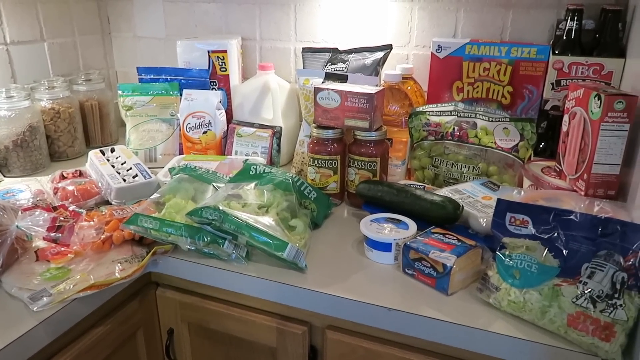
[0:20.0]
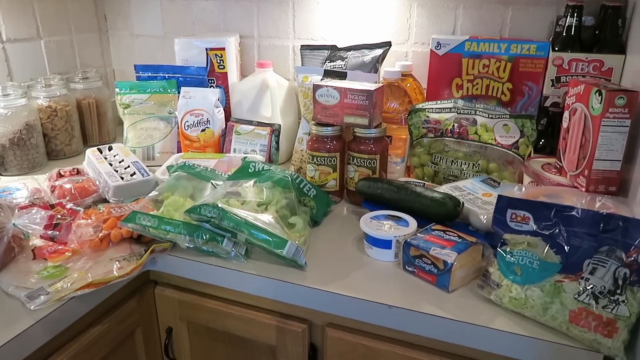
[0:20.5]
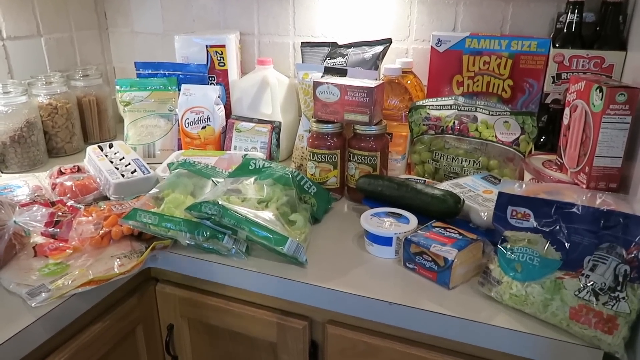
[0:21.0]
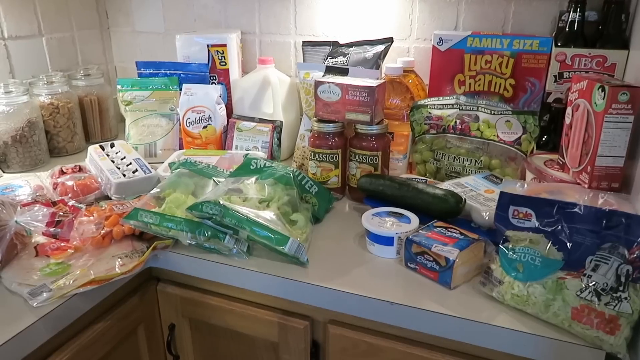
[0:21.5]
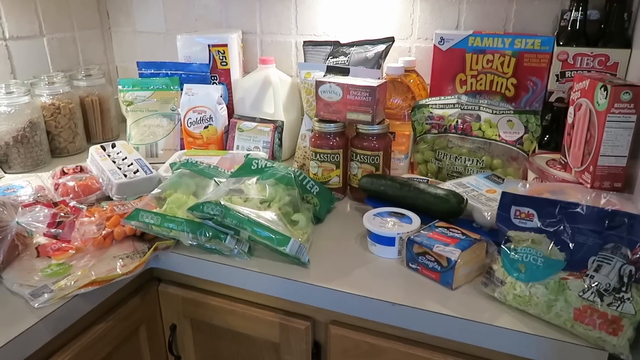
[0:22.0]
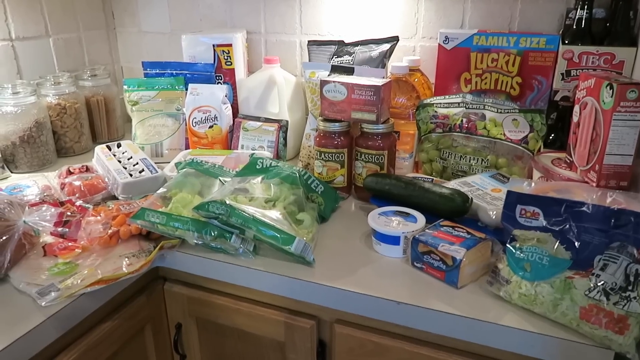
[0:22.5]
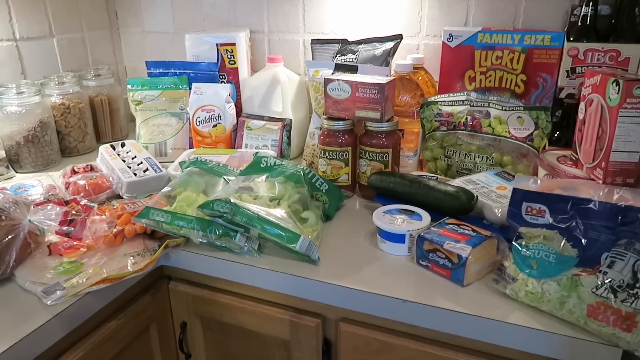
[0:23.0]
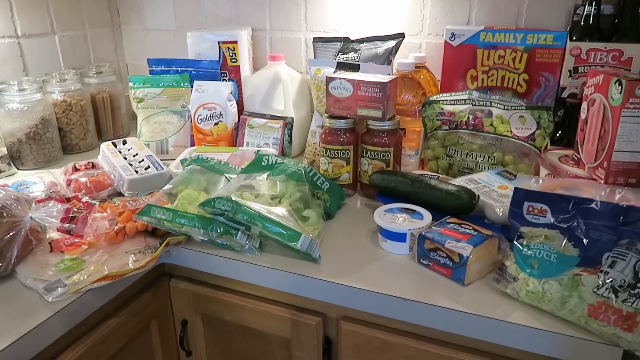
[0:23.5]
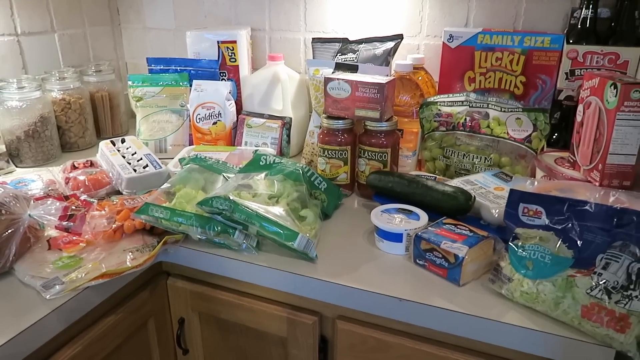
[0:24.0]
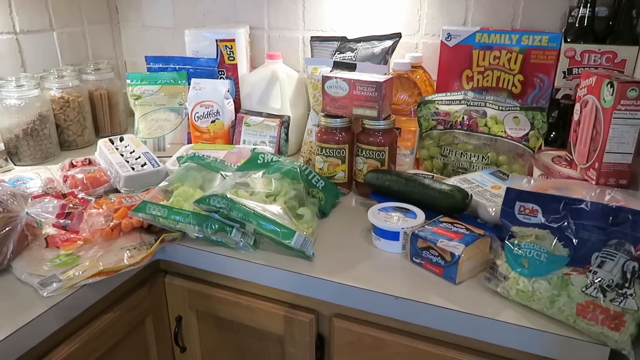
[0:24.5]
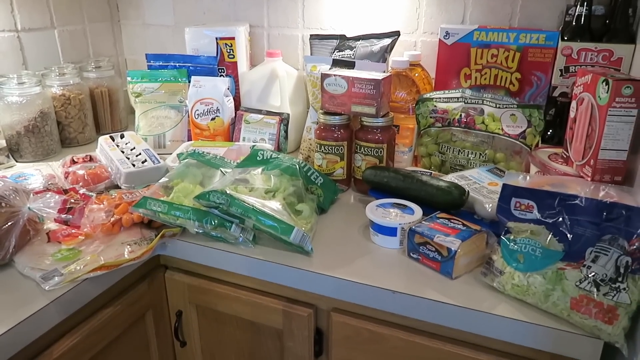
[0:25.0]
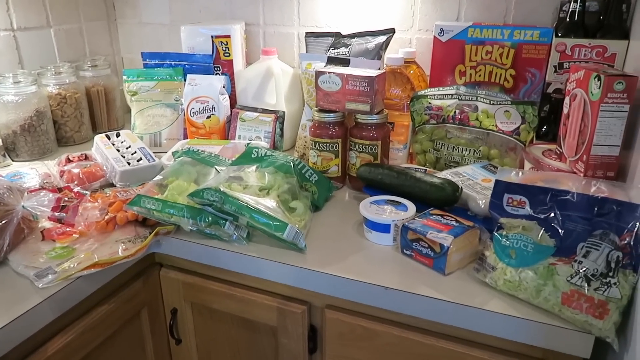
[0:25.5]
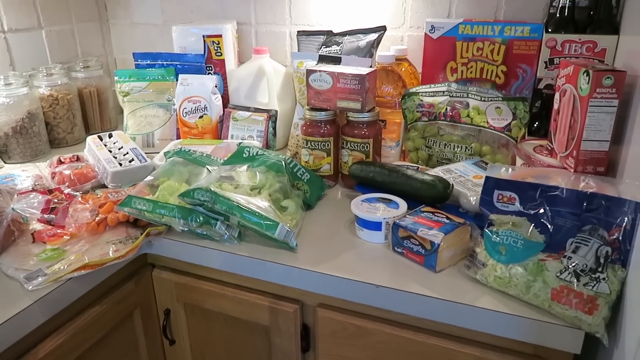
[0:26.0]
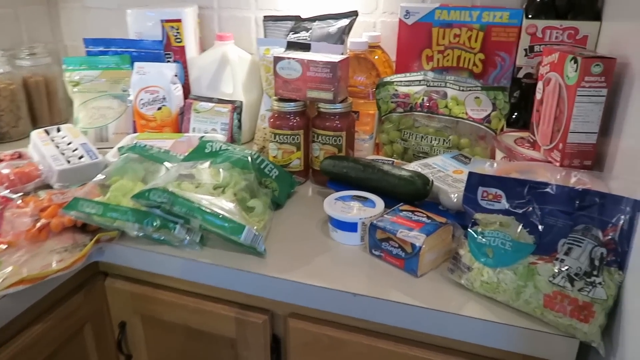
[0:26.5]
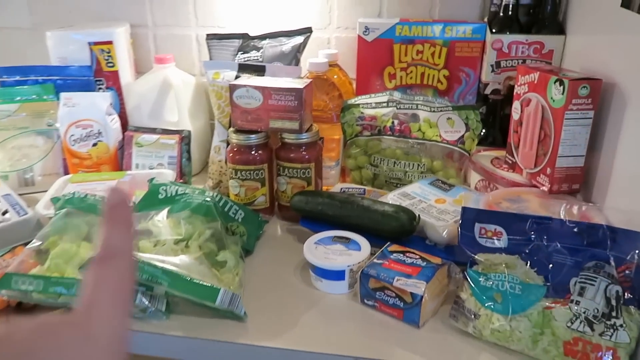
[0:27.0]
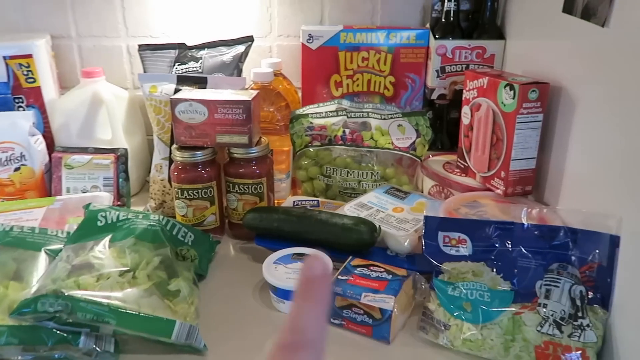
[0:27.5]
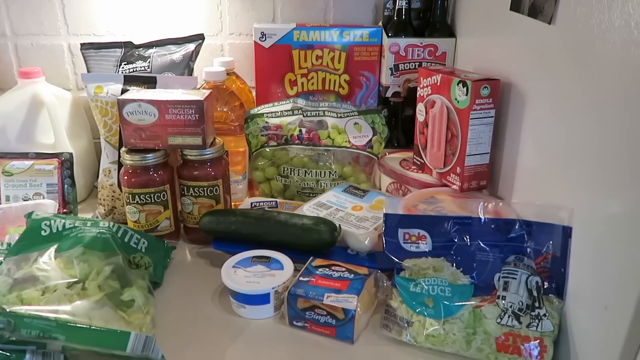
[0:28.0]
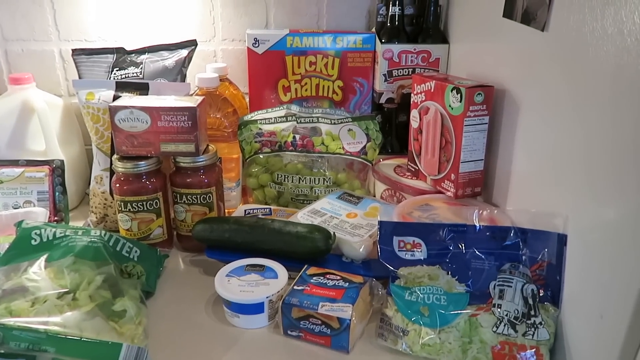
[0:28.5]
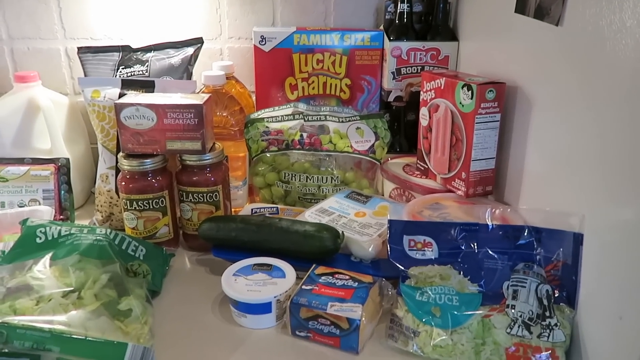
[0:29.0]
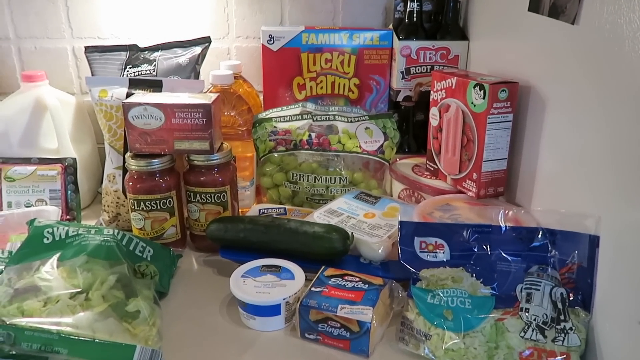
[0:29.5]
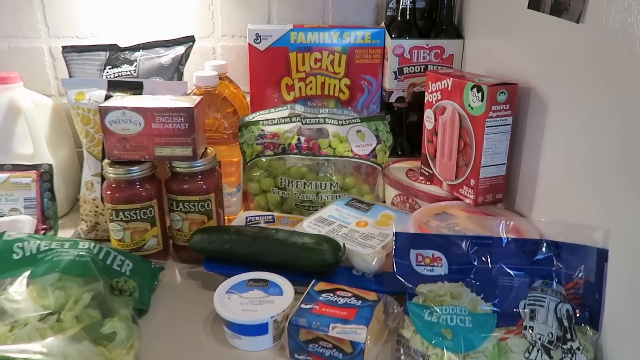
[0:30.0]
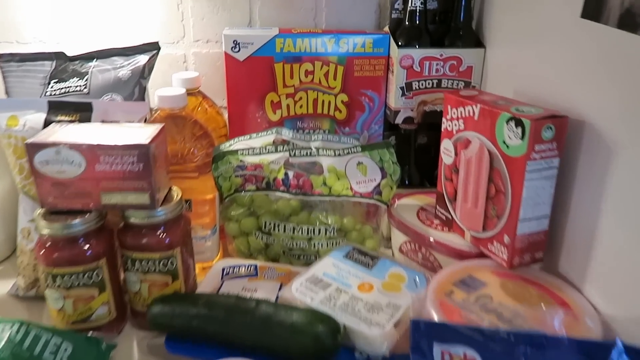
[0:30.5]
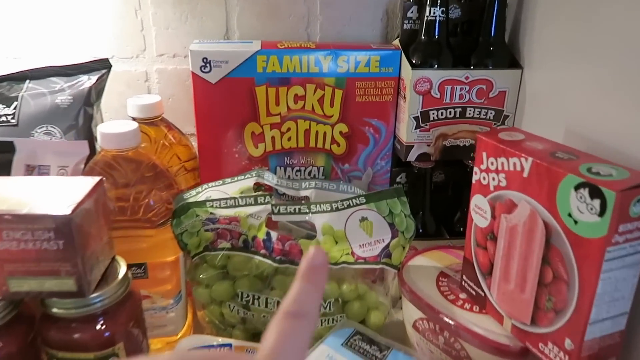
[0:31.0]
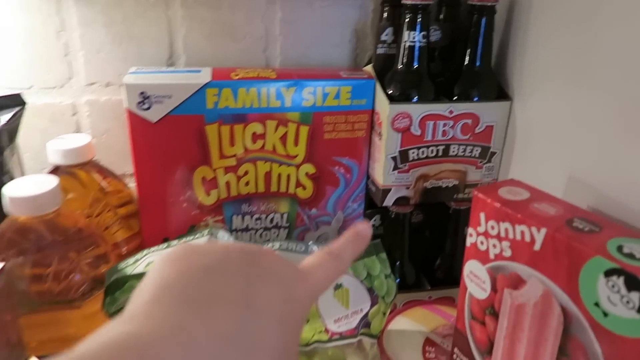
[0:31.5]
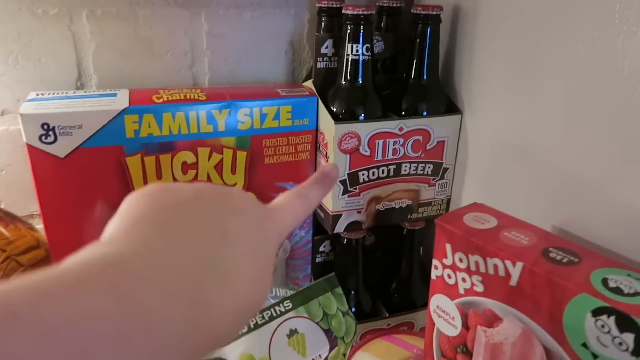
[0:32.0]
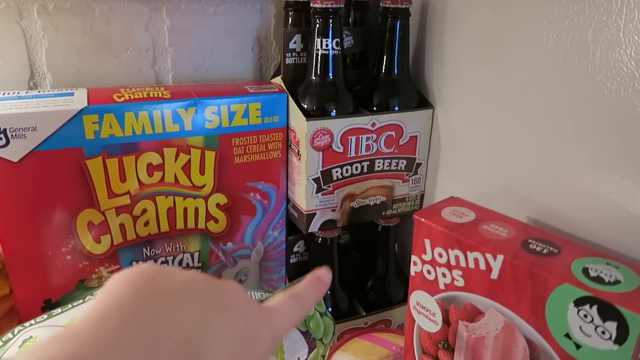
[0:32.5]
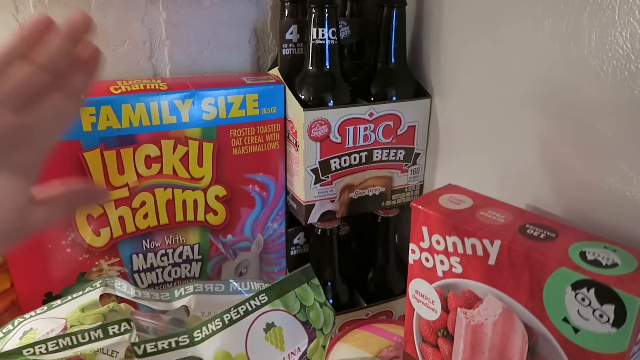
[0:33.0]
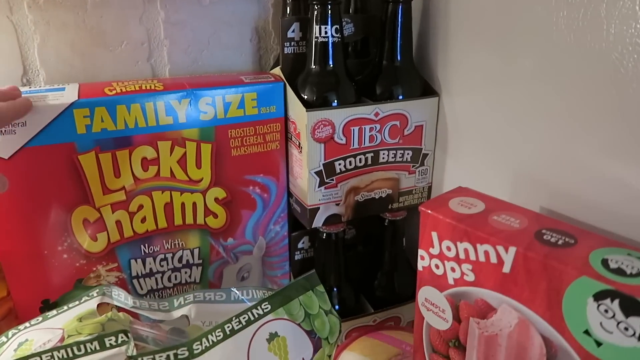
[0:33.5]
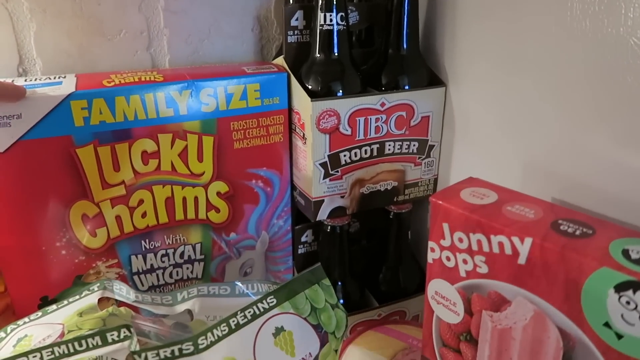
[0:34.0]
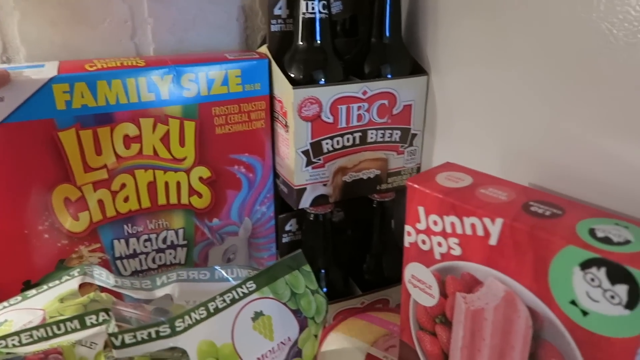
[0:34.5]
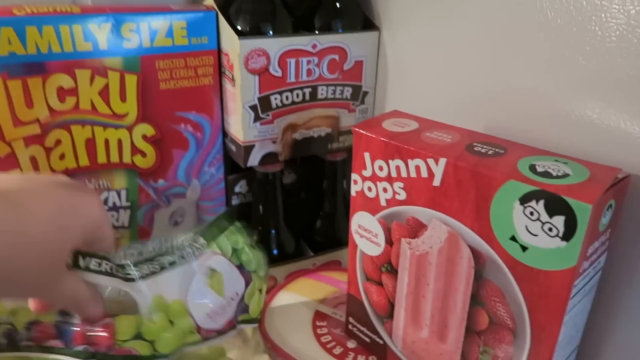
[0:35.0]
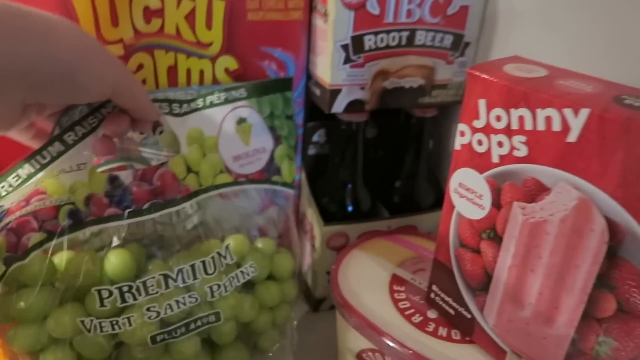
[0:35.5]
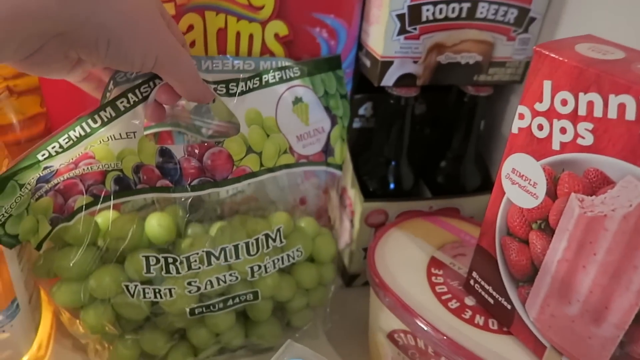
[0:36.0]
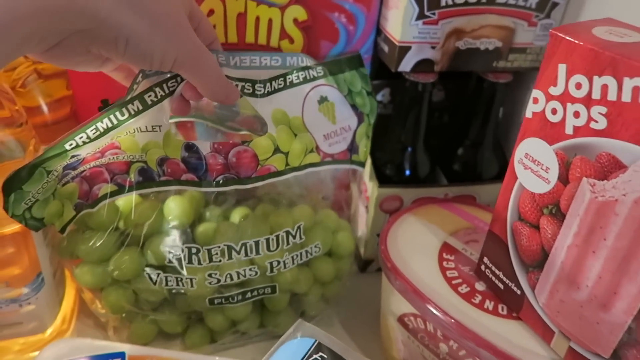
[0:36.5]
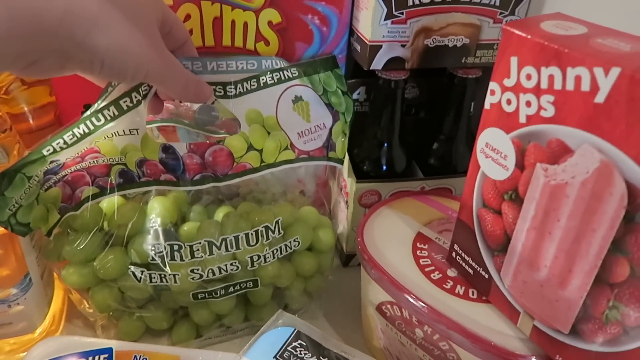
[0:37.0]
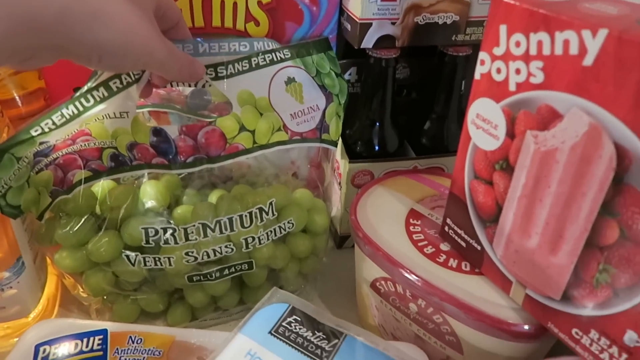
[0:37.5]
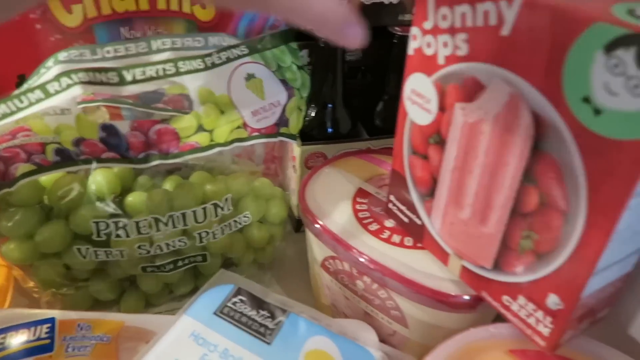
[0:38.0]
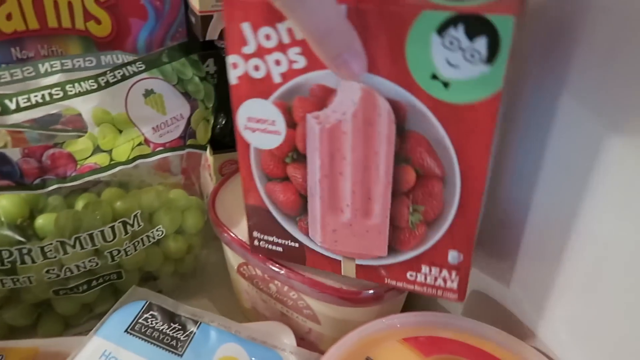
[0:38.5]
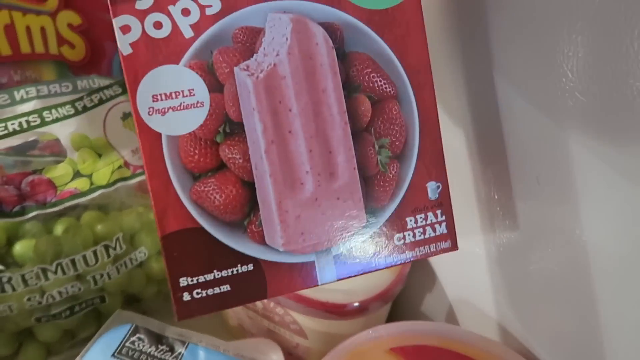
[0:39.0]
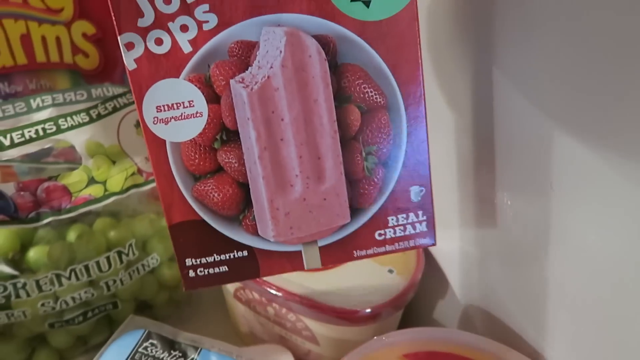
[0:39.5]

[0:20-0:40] The slightly wobbly camera keeps focusing on the groceries, then moves to the right-hand side of the haul, which is up against the wall. A hand comes in, waves, and is removed. The camera zooms in on the root beer and the Lucky Charms, which are the magical unicorn variety. The hand then holds up a bag of what looks like grapes, apparently a bunch of green grapes. Next it picks up a box of Johnny Pops ice lollies in strawberry and cream flavour. They come in a red cardboard box with a photograph on top of the ice lolly sitting in a bowl of strawberries, and a logo of a dark-haired boy with glasses and a bowtie. Below this there seems to be a container of ice cream.